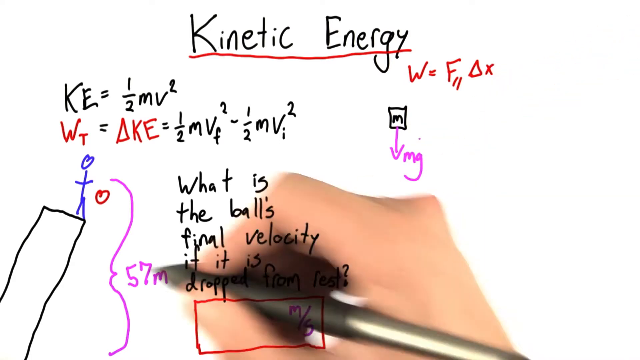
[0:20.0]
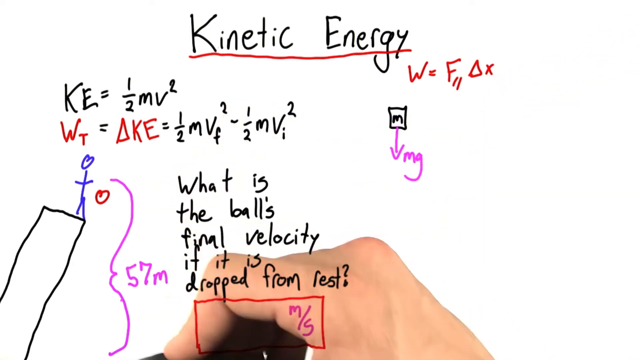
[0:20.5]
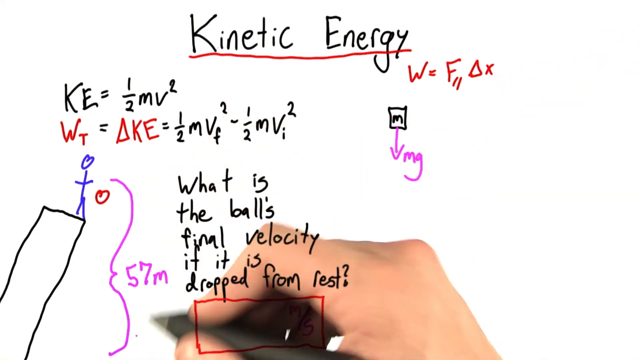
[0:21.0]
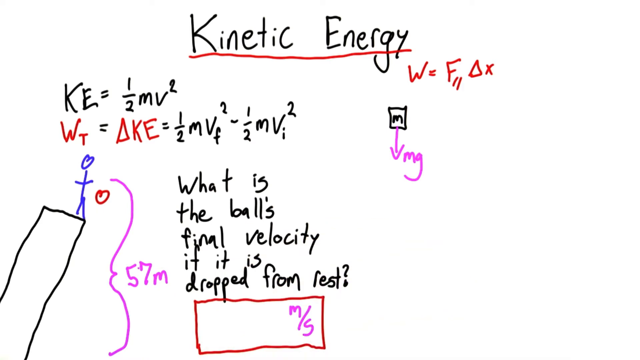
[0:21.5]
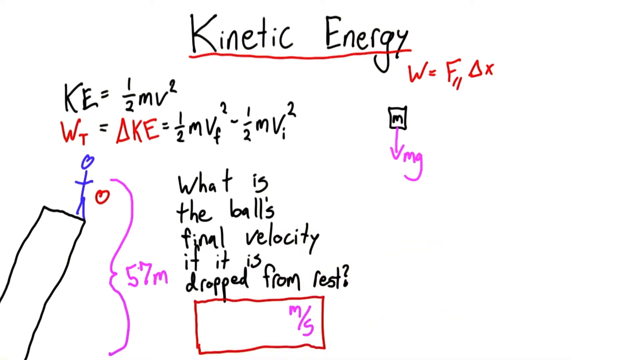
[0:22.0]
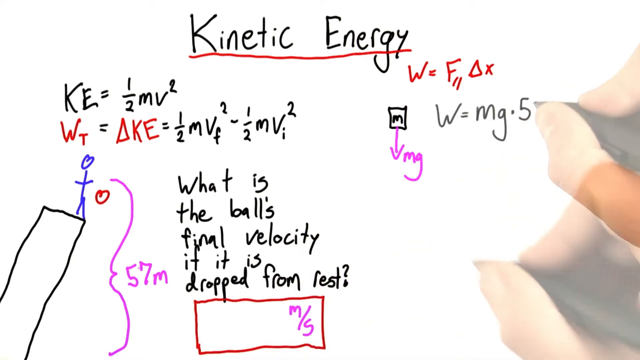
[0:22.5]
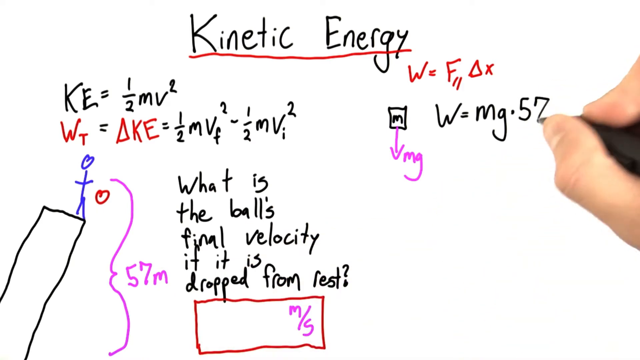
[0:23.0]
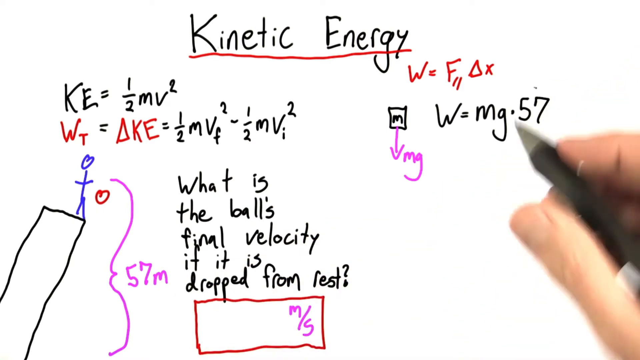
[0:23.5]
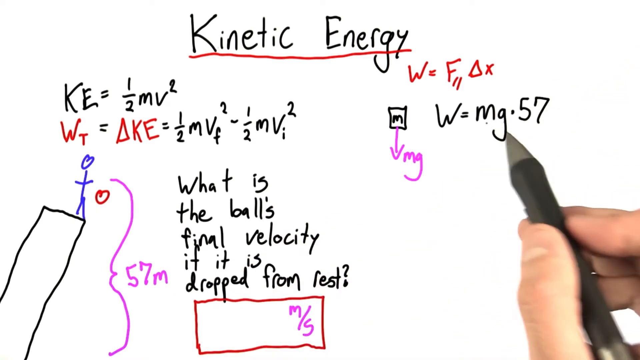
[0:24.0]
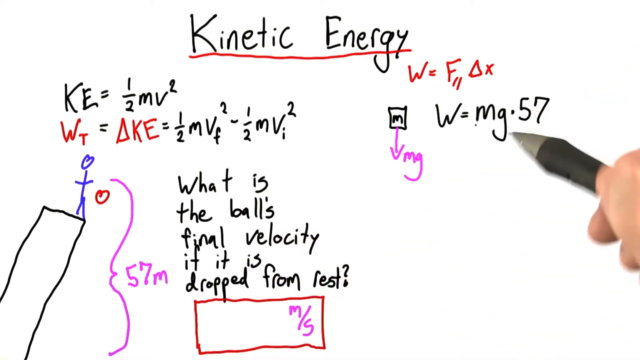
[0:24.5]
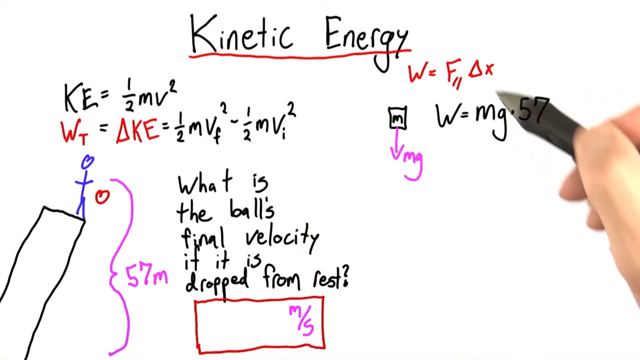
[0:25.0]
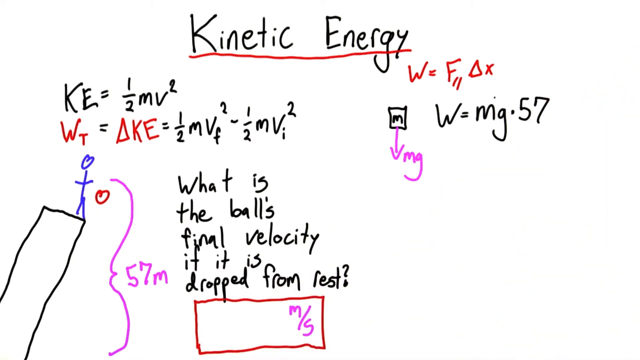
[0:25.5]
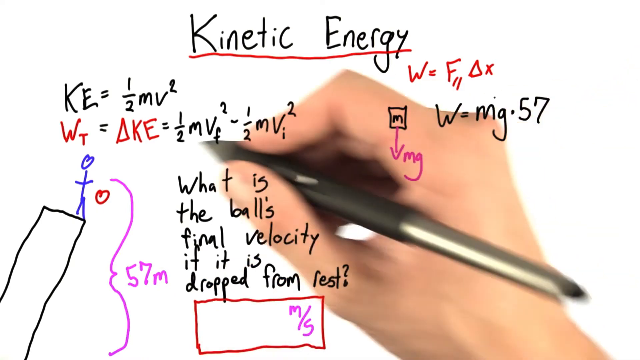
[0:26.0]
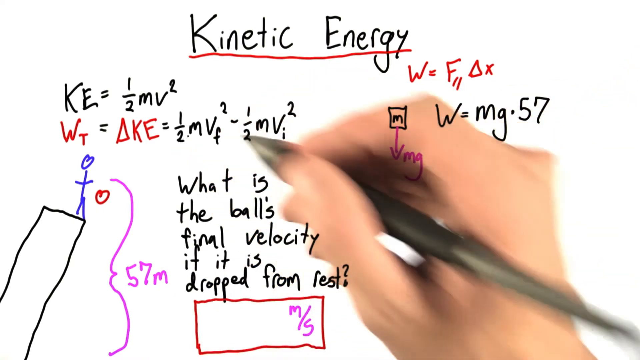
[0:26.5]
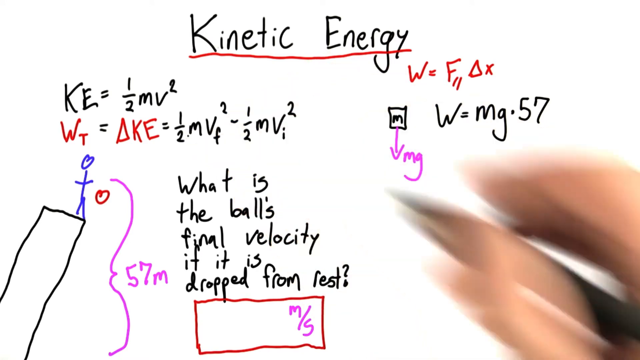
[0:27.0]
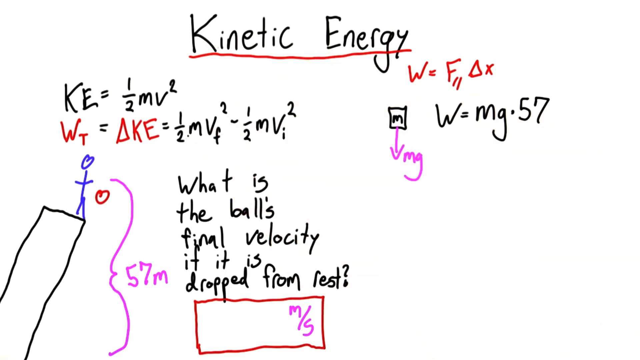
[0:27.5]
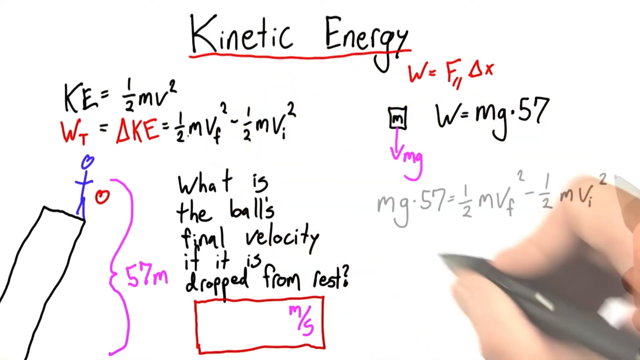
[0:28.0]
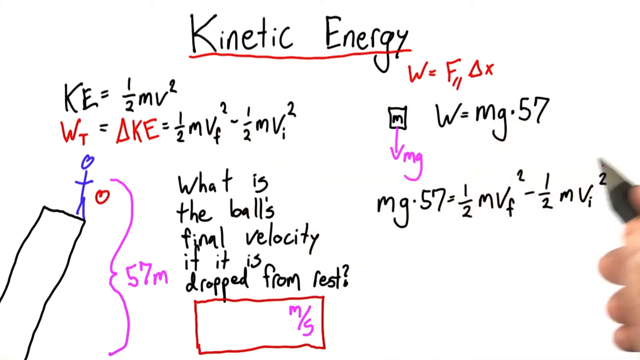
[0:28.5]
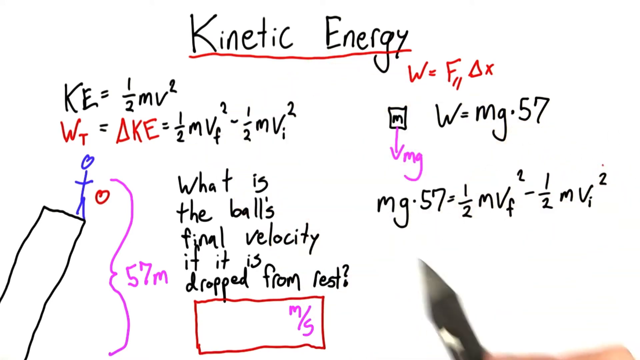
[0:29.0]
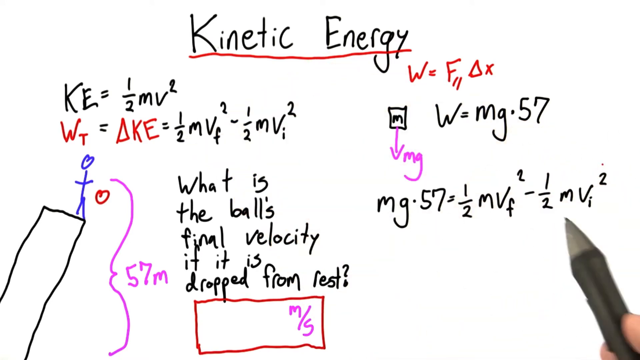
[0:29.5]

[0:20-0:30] The hand is sometimes off screen but occasionally rises from the bottom of the screen, then suddenly pops up on the right, next to the earlier text, as black text appears: "W = mg · 57", where the dot may be a multiplication symbol. For a moment it looks like the pen is actually writing this, but the pen and hand again look like they are below the writing. More text, including "mg" and a lot more, then appears close to the lower right, which was previously empty; it is not written but just appears on the screen. The hand is a right hand holding the pen fairly close to its end, choking up on it a lot. The pen is cylindrical and mostly black, with a pointed silver tip, and the back of the handle is silver as well. The hand is mostly gesturing around, and at times an edit makes it simply appear somewhere else rather than move there. The screen is getting close to being entirely filled with text and drawings.